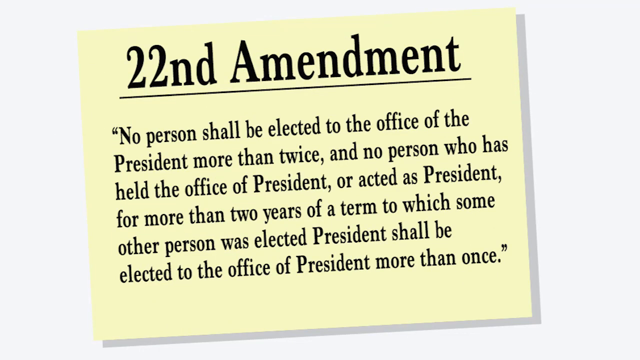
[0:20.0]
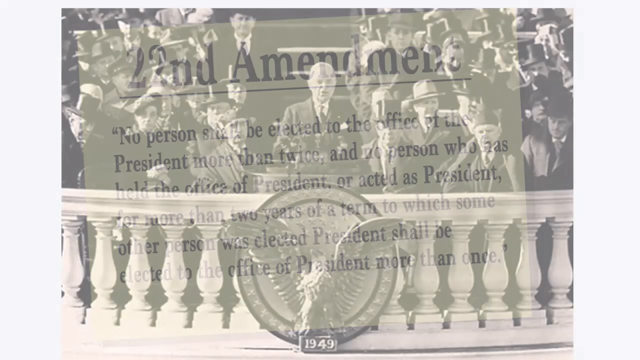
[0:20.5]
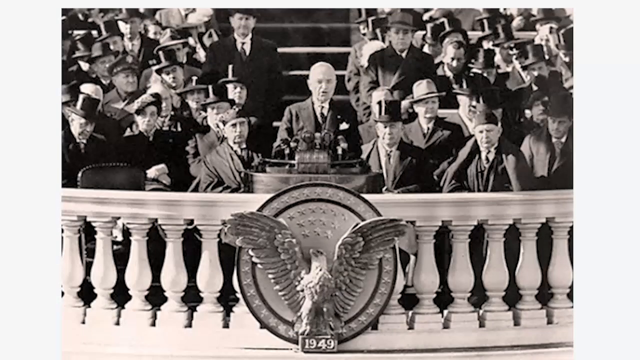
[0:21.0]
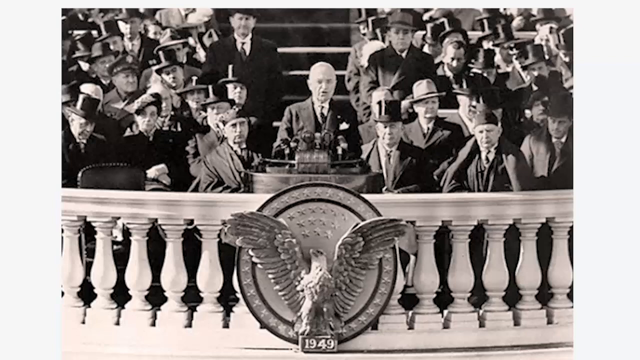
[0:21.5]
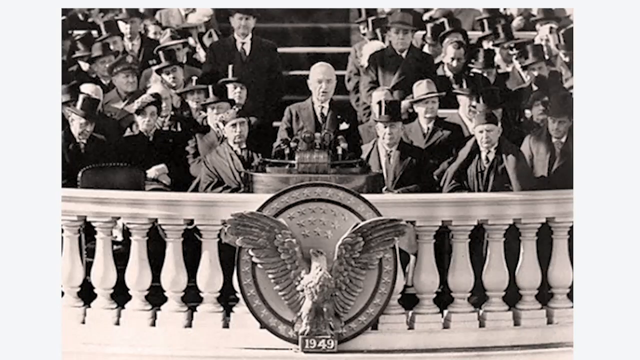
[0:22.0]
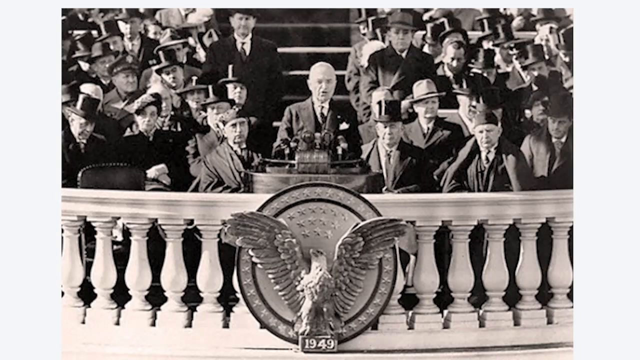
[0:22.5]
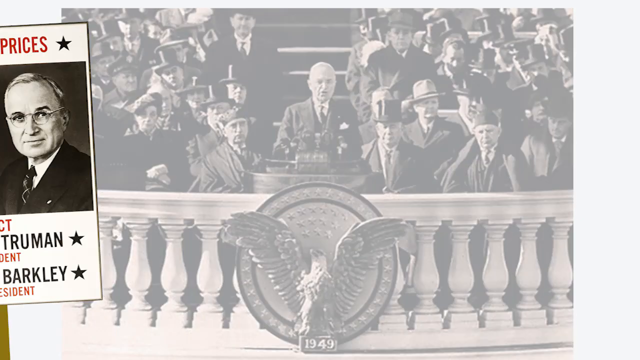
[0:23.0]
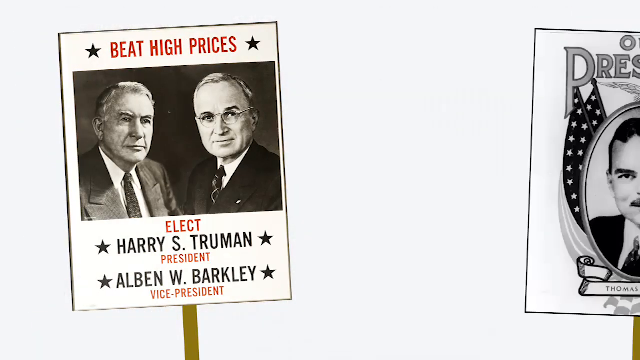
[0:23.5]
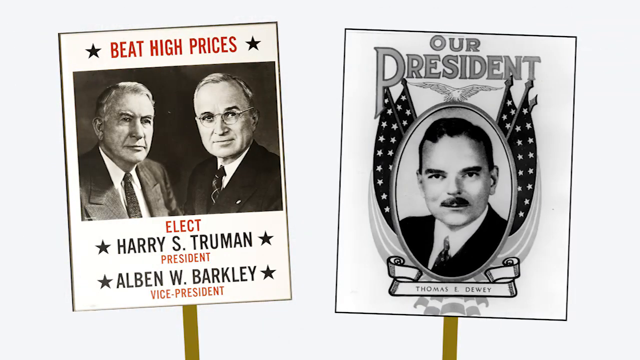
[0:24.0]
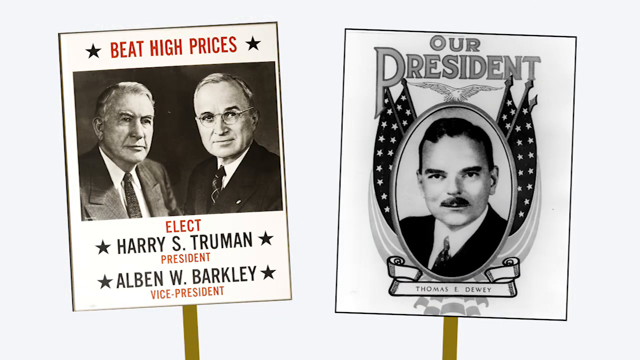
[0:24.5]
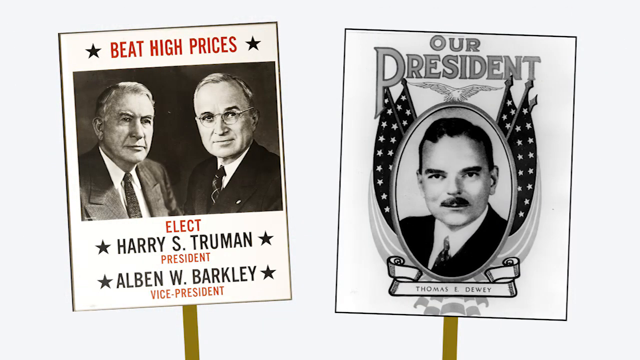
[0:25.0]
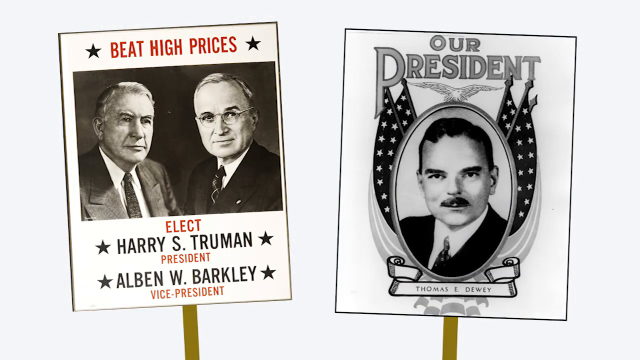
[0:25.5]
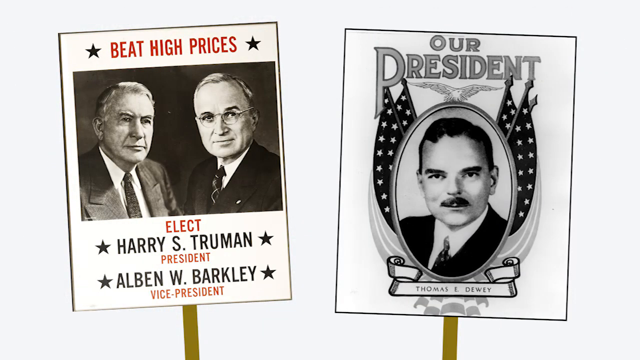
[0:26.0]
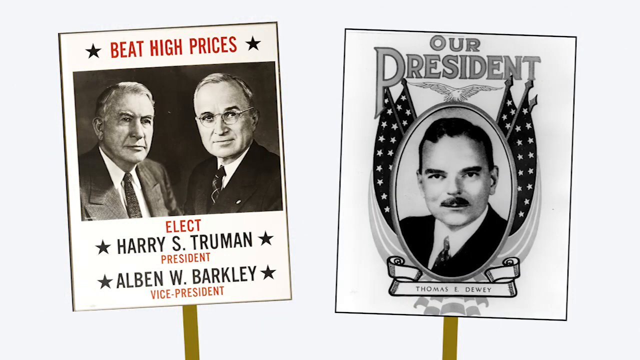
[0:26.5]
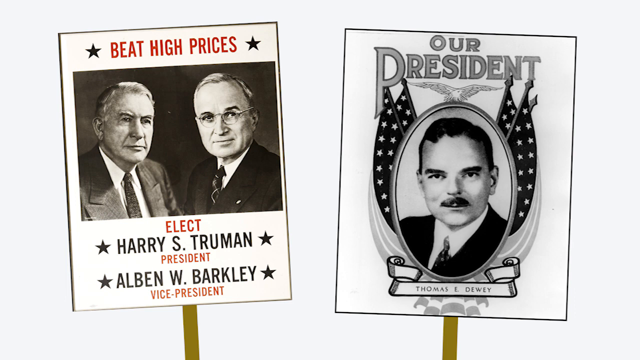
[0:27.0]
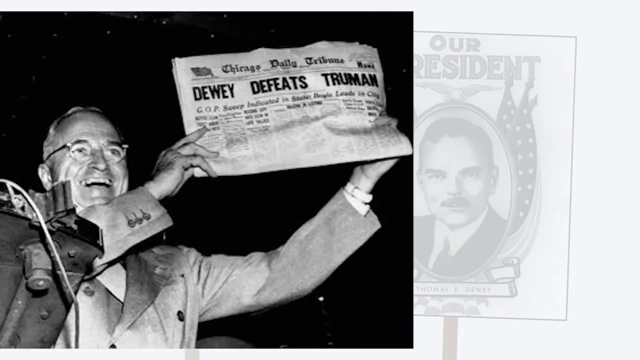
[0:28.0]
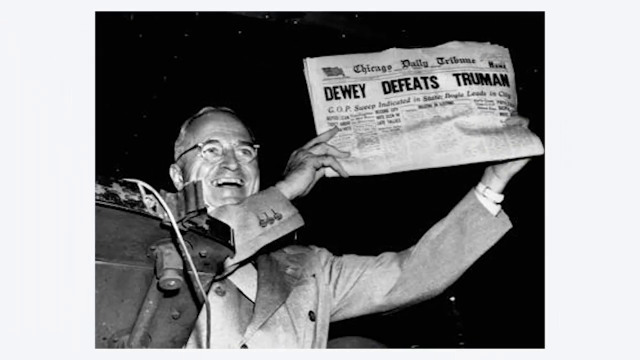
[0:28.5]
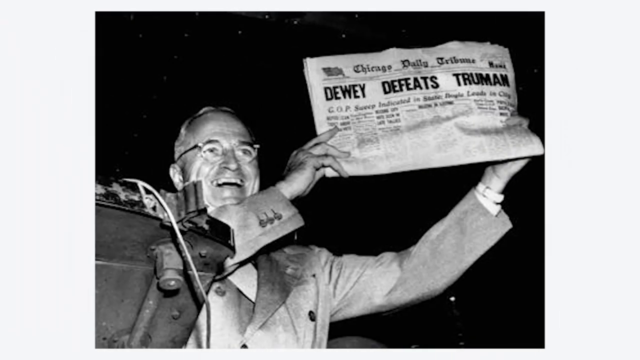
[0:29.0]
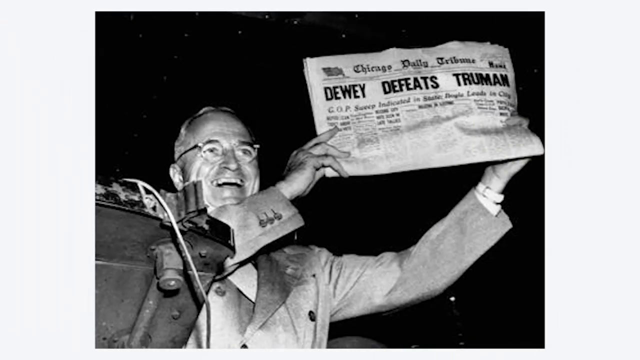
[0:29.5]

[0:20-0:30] What looks essentially like a yellow post-it note with black text is shown, with "22nd Amendment" at the top and the text of the 22nd Amendment quoted below. Next comes a photograph of Harry Truman at his inauguration, giving his inaugural address. He is standing on what is apparently the steps of the Capitol, with a kind of white fence or gate with thick columns. In front of him is a seal with a bald eagle with its wings open, and a crowd of men and women is seated behind him, with many top hats standing out in the crowd. The image stays for a while, and then election images appear: a picture of Truman with his vice presidential candidate Albin W Barkley, their portraits right next to each other, and a poster promoting his opponent Thomas E Dewey, with a brown mustache, that says "Our president." These stay up for a moment, and then the image of Truman holding up the Chicago Daily Tribune with the headline "Dewey defeats Truman" appears.